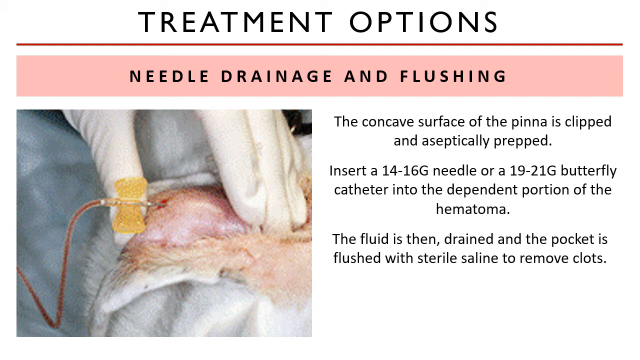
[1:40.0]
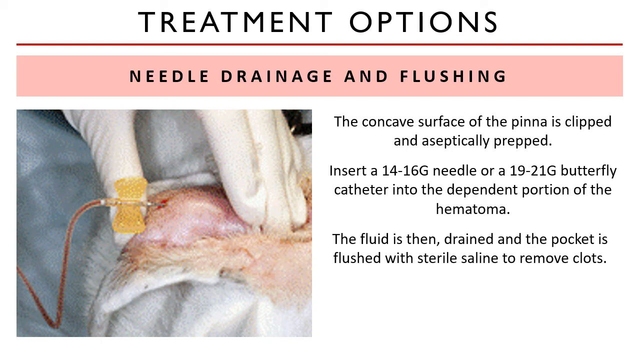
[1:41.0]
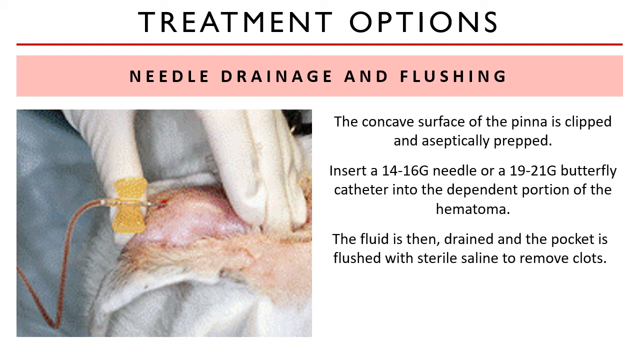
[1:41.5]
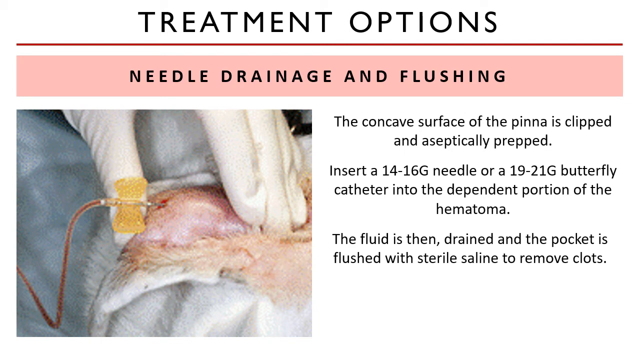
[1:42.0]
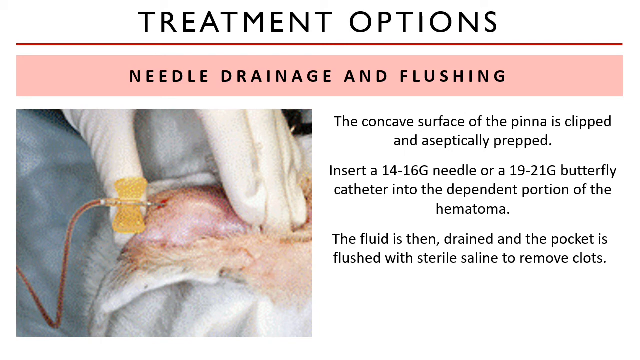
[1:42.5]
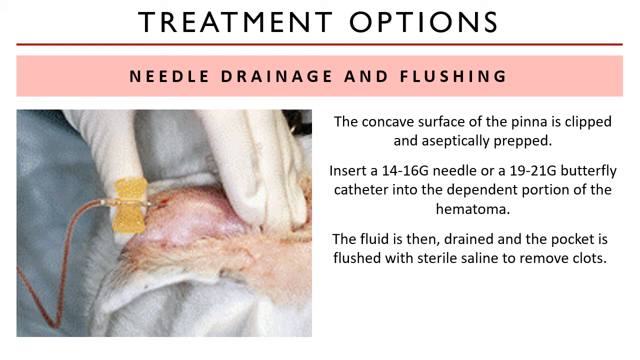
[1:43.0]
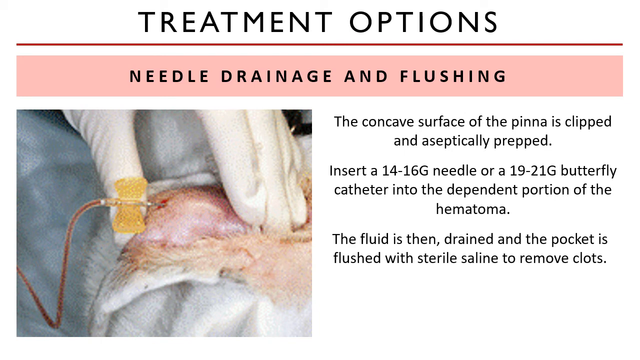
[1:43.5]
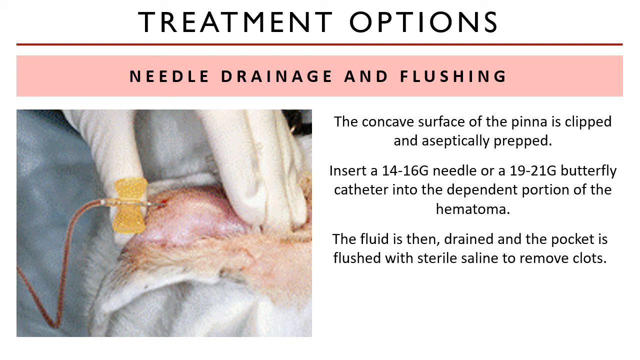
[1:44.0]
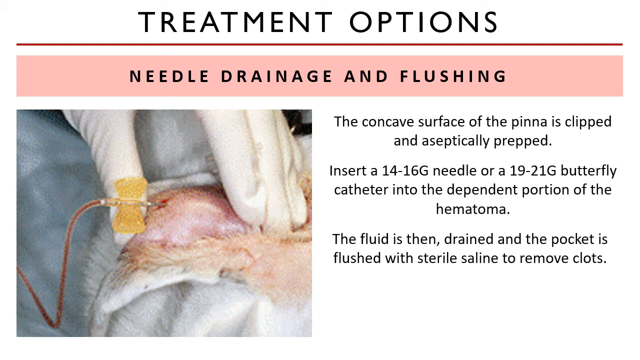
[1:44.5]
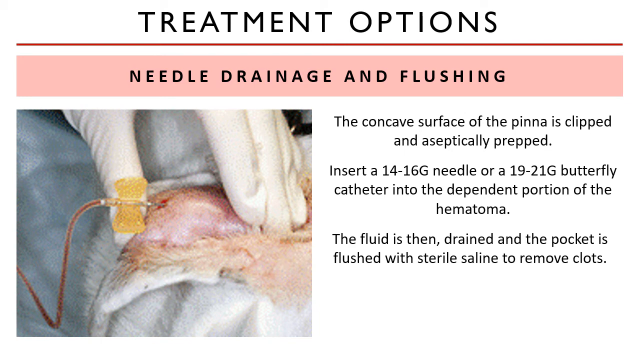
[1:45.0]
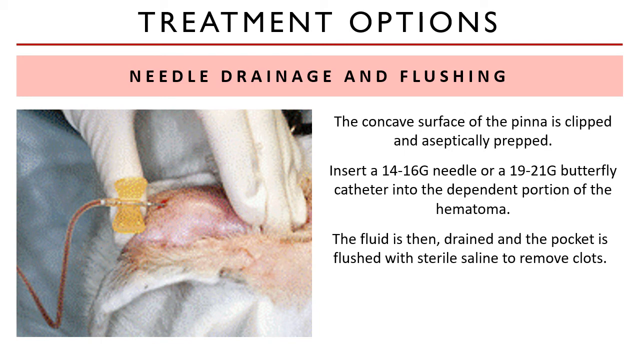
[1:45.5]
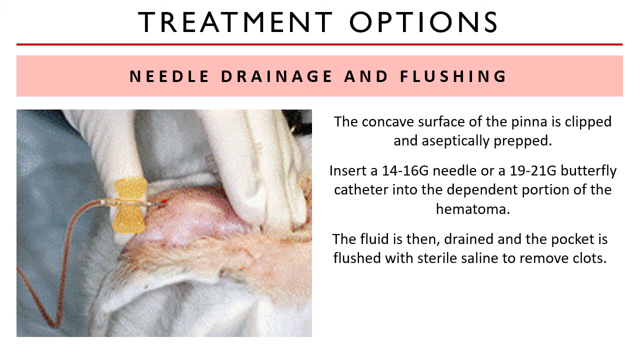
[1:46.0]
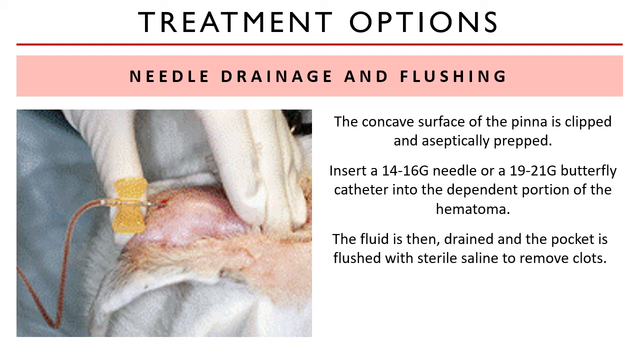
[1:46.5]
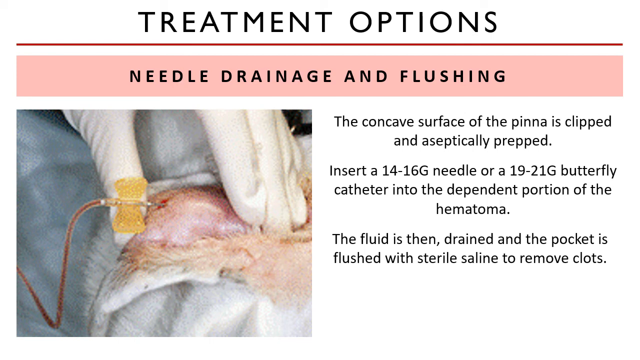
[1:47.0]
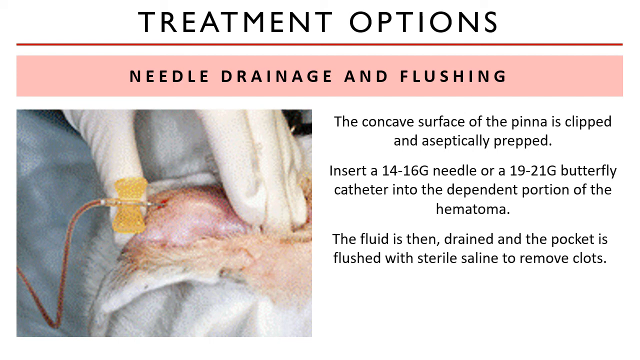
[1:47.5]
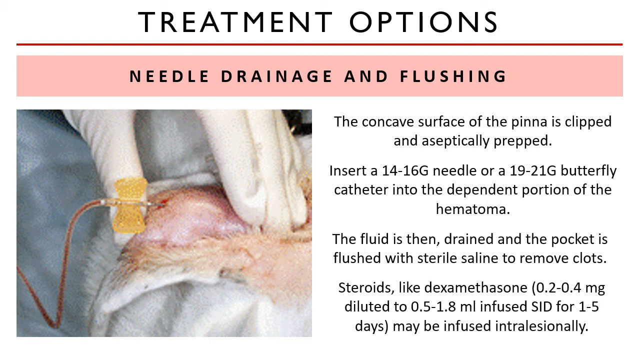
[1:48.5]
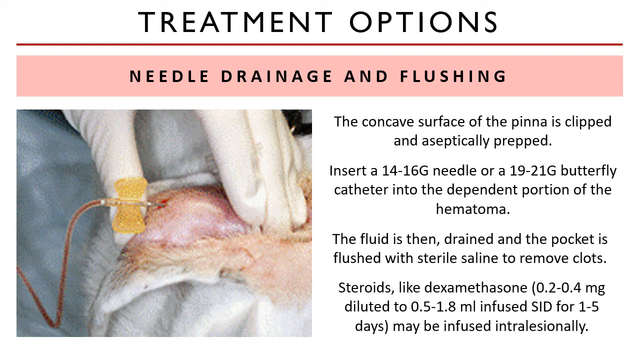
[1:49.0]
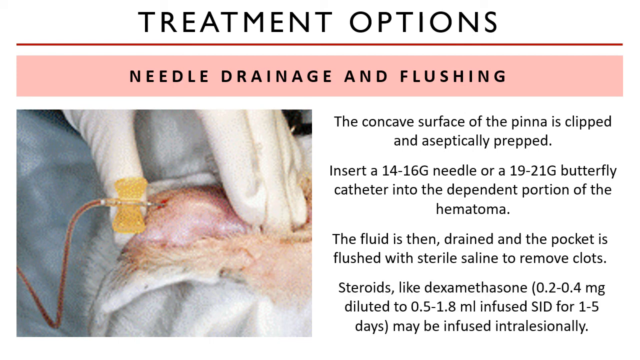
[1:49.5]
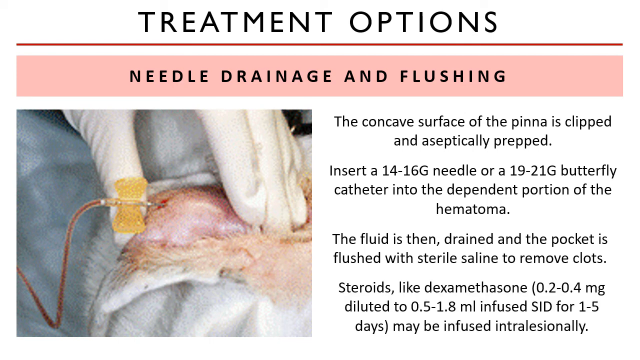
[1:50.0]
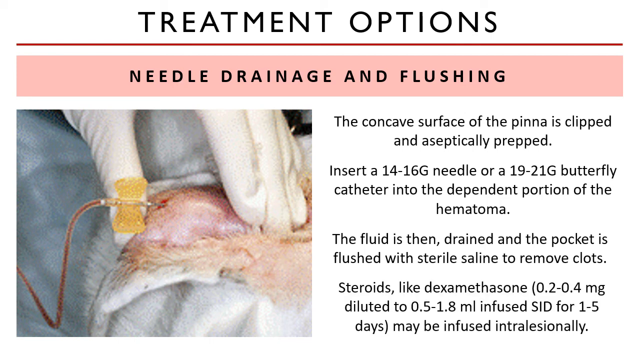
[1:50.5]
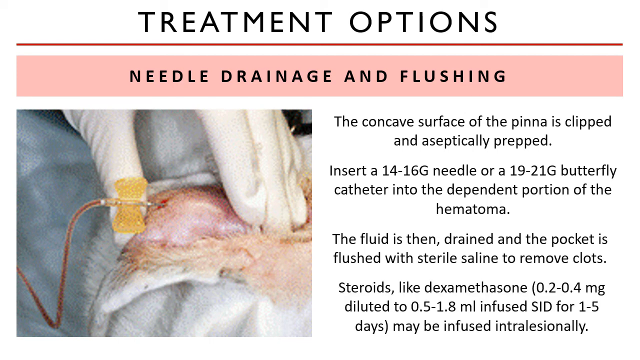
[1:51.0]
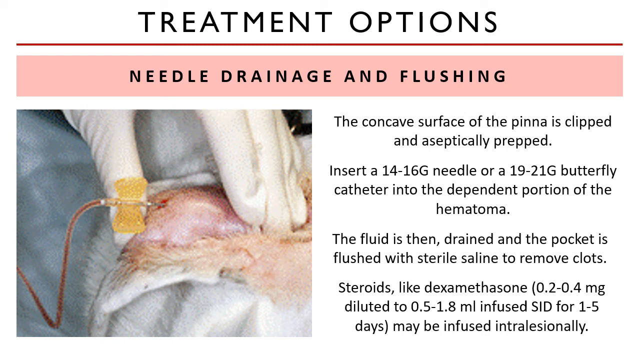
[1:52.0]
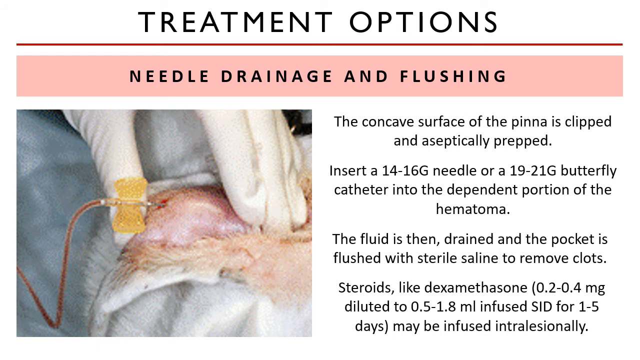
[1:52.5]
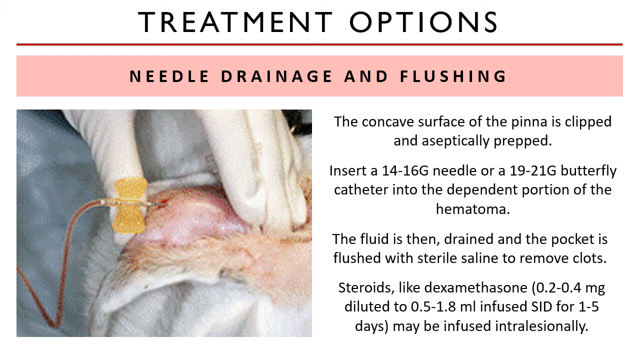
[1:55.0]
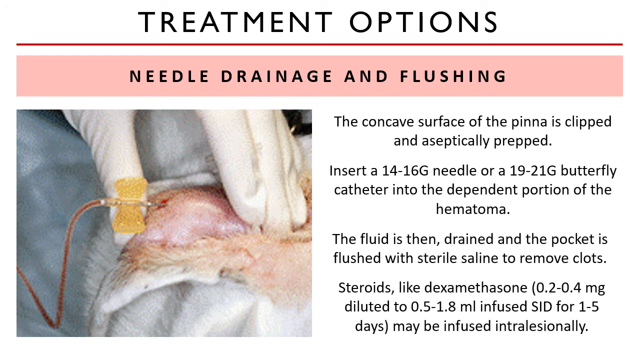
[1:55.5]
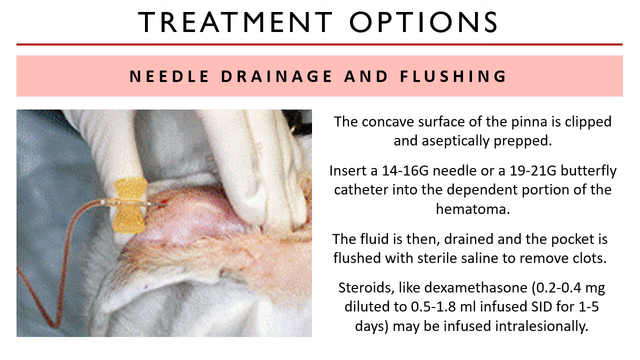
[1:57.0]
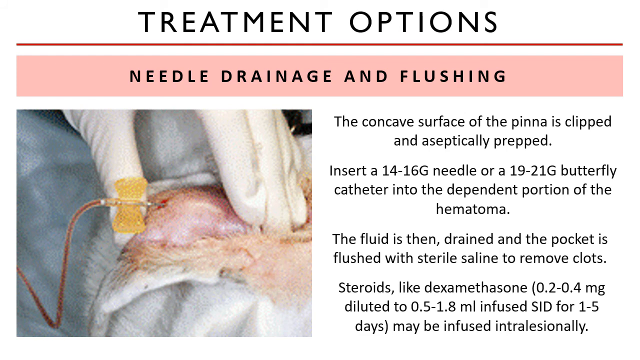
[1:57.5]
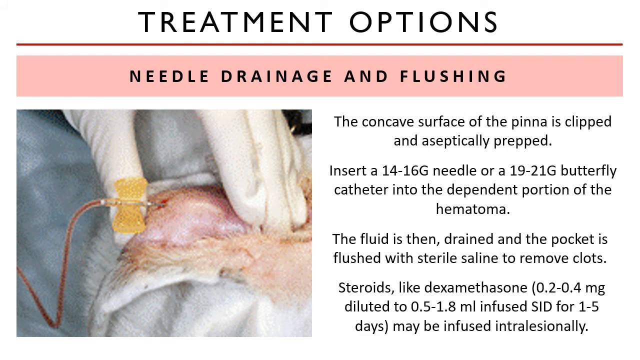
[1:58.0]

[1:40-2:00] The slide has the same design and background. In black capital letters it reads "treatment options." There is a little white background, a red border across, a little white background again, and then a thicker pink border across, which reads "needle drainage and flushing" in black capital letters. The image shows what looks like beige fur and a swollen area with a needle coming out of it and blood, so maybe they are draining it. A medical professional's white-gloved hand is visible. On the right side of the picture the text reads "the concave surface of the PINNA is clipped and aseptically prep," "insert a 14-16G needle or a 19-21 butterfly catheter into the dependent portion of the hematoma," and, after some space, "the fluid is then drained, and the pocket is flushed with sterile saline to remove any clots."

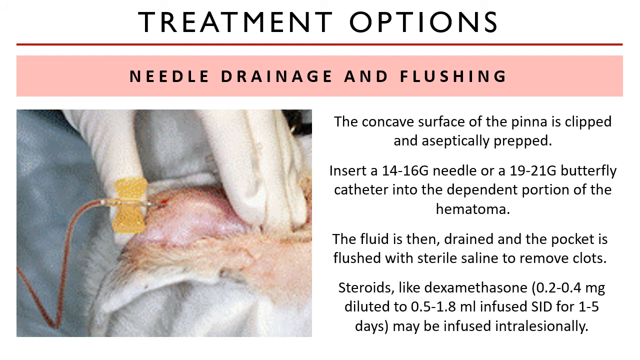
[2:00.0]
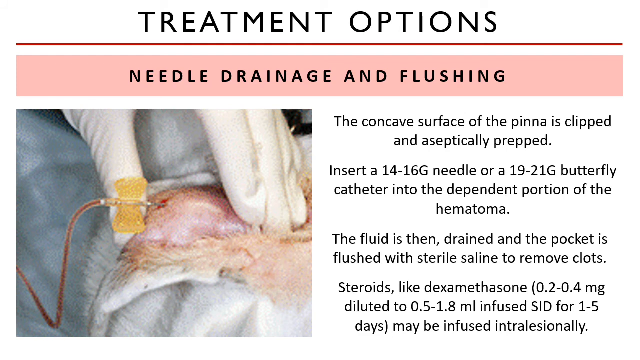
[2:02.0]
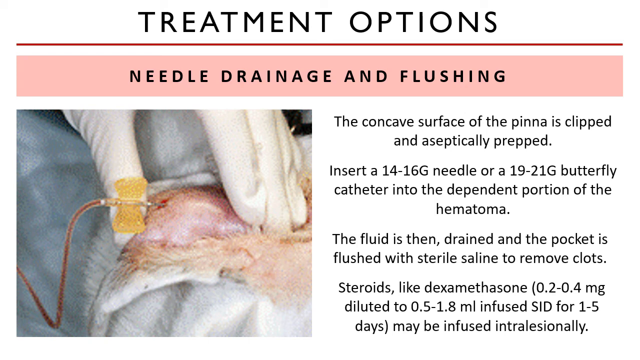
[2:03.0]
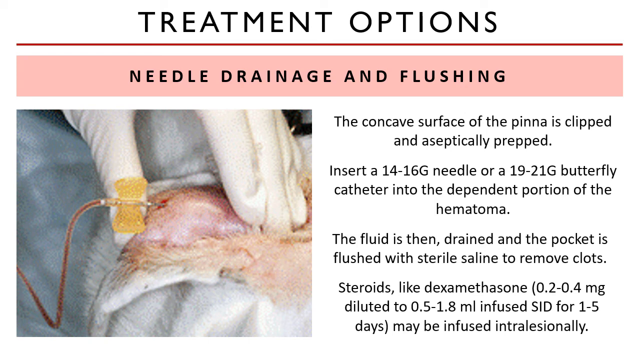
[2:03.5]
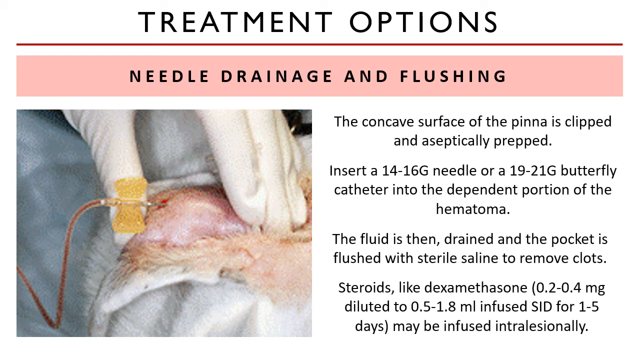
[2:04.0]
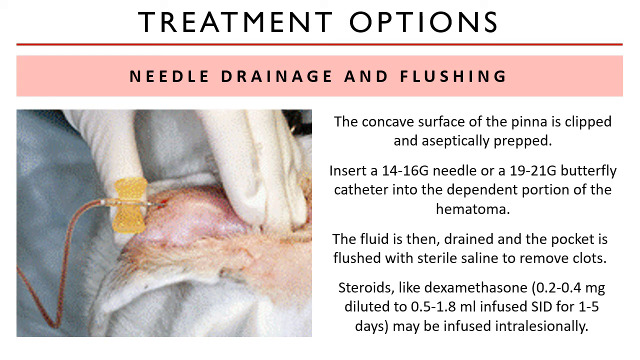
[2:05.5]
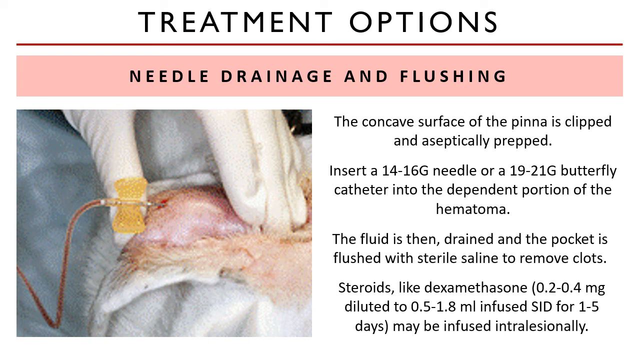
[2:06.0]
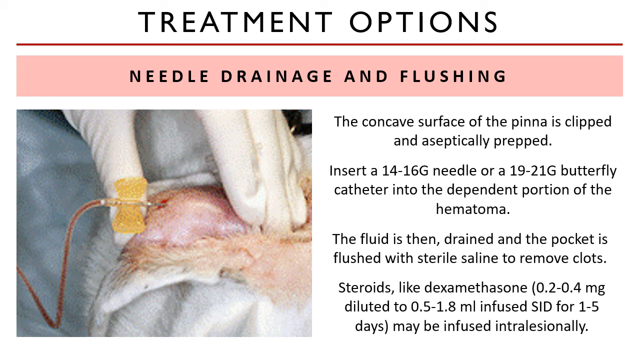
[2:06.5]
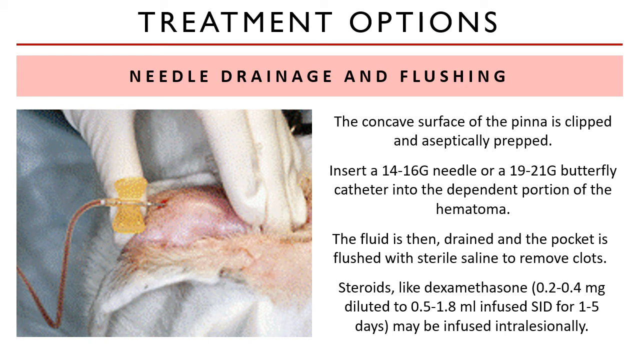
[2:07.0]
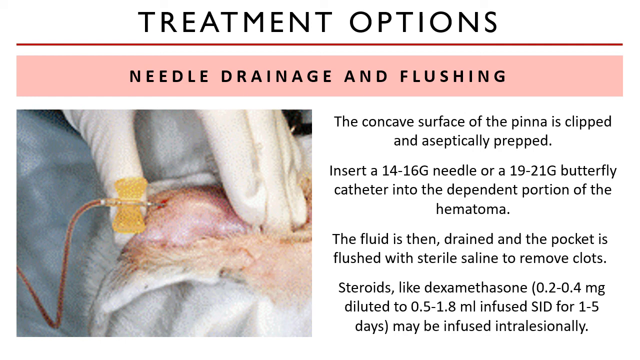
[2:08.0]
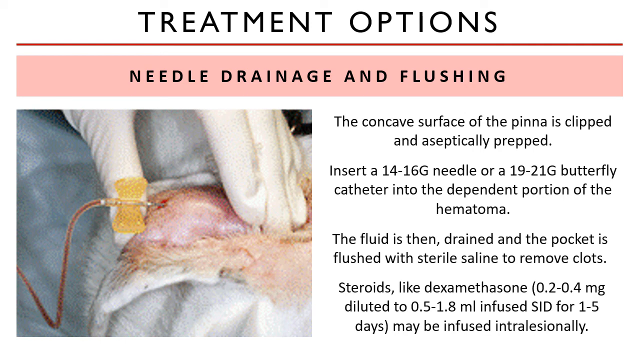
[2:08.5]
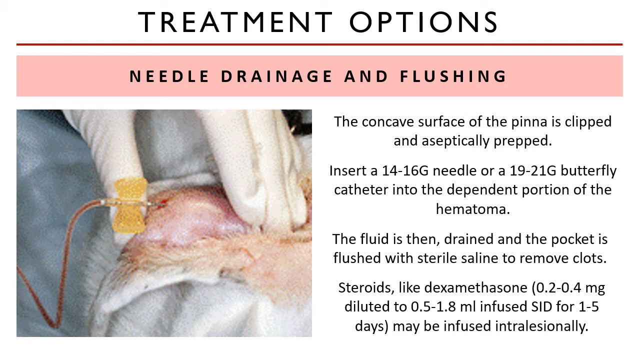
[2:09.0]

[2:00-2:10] The slide is pretty much the same, with additional text at the bottom that had almost appeared before: "steroids like dexamethasone (0.2-0.4 mg diluted to 0.5-1.8 ml" followed by "may be infused intralesionally."